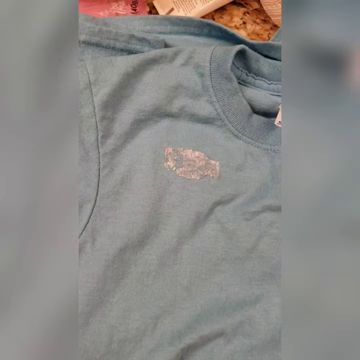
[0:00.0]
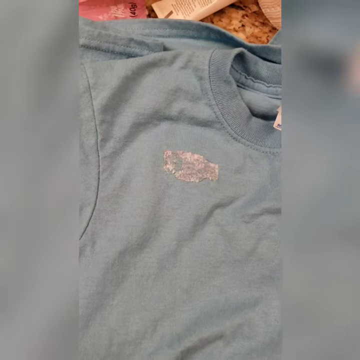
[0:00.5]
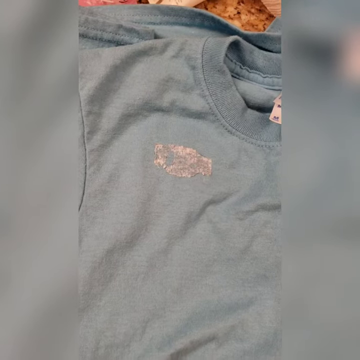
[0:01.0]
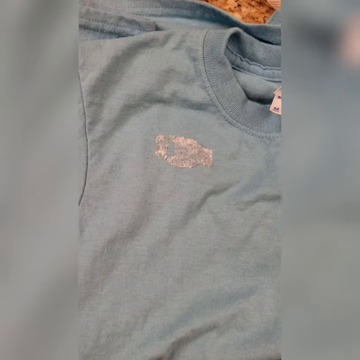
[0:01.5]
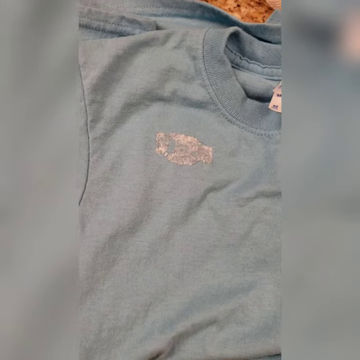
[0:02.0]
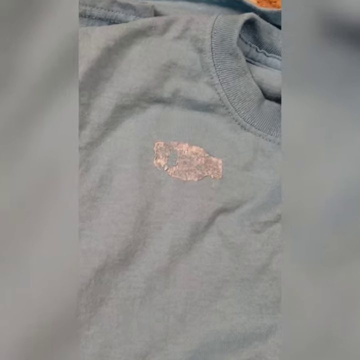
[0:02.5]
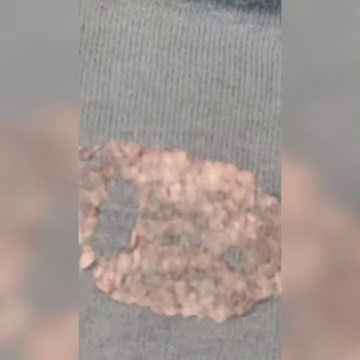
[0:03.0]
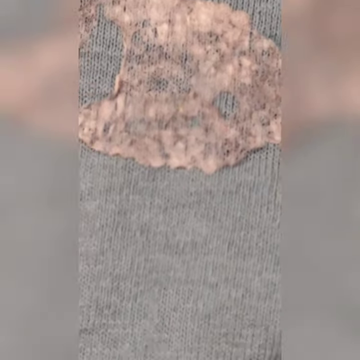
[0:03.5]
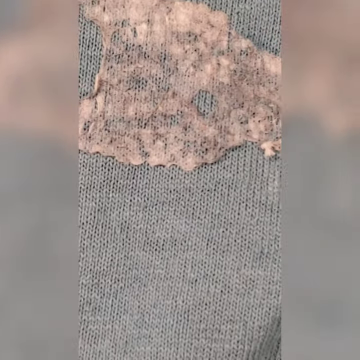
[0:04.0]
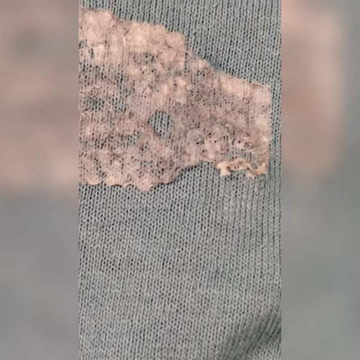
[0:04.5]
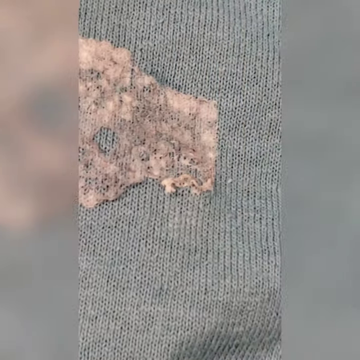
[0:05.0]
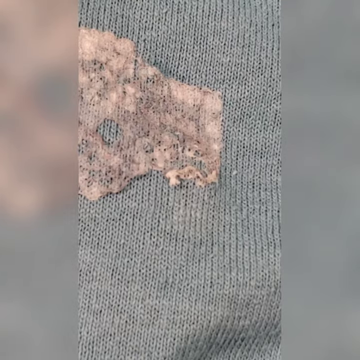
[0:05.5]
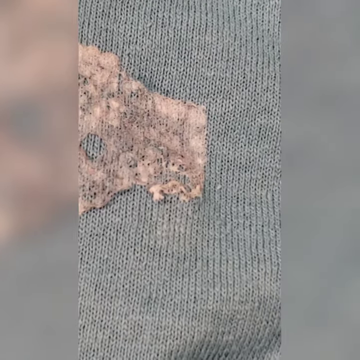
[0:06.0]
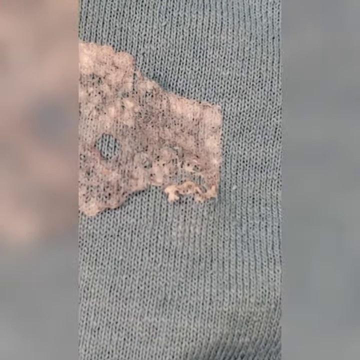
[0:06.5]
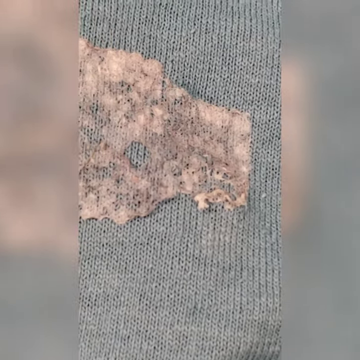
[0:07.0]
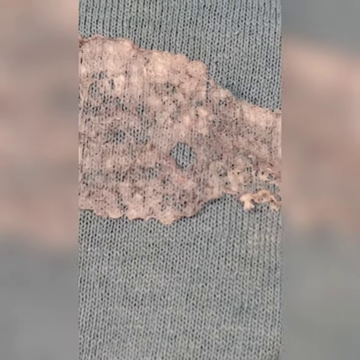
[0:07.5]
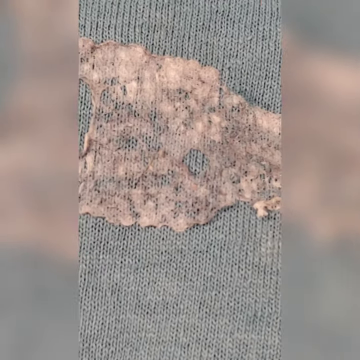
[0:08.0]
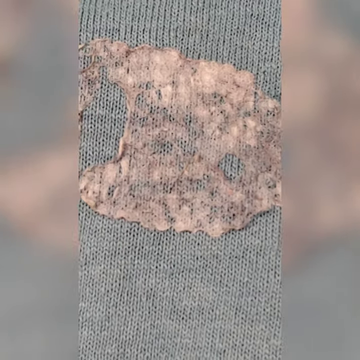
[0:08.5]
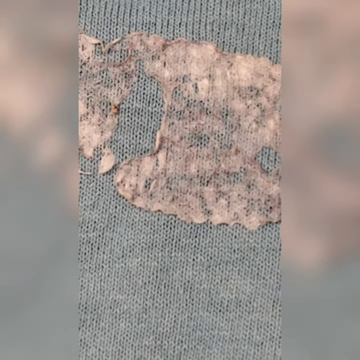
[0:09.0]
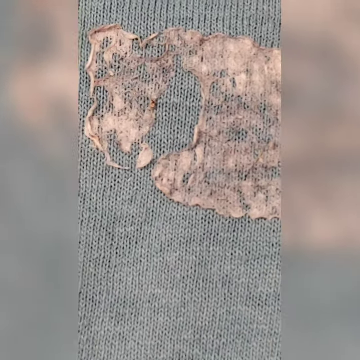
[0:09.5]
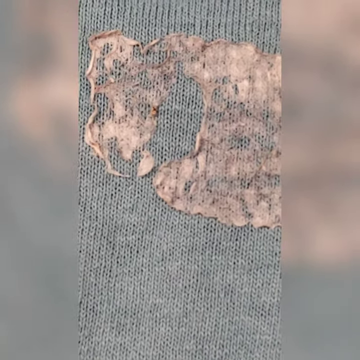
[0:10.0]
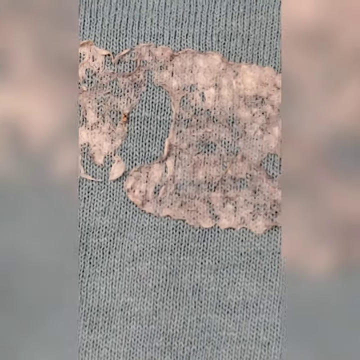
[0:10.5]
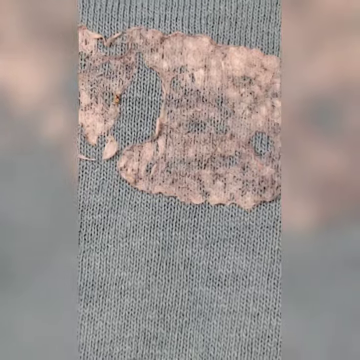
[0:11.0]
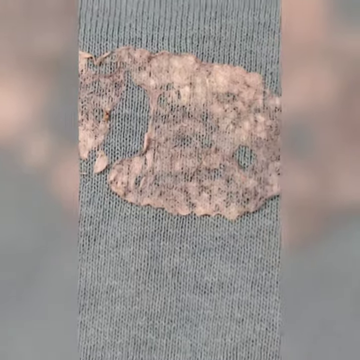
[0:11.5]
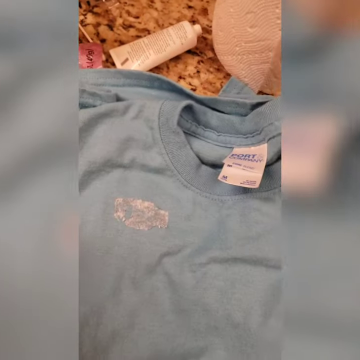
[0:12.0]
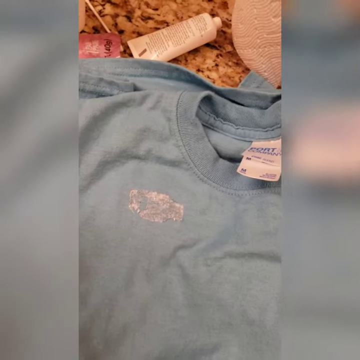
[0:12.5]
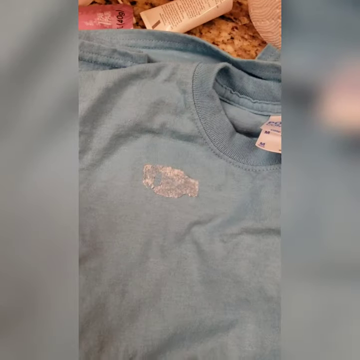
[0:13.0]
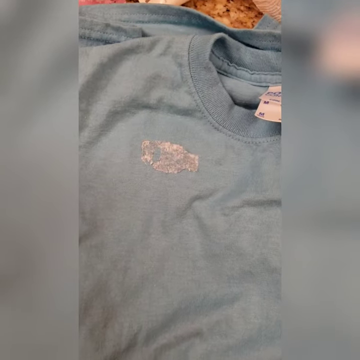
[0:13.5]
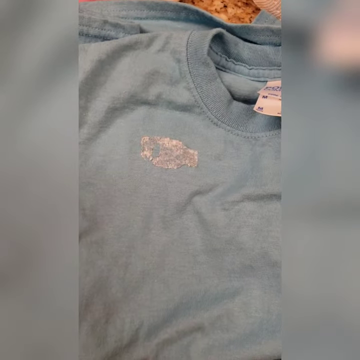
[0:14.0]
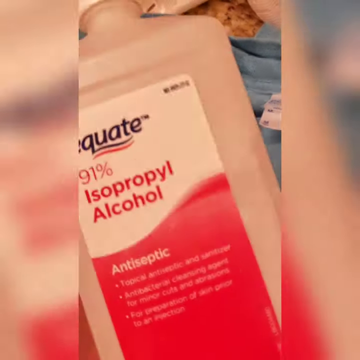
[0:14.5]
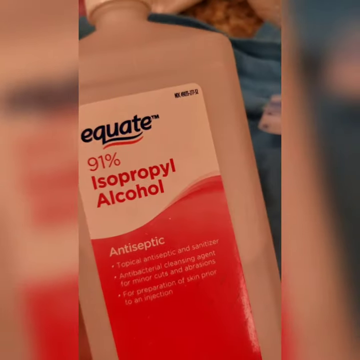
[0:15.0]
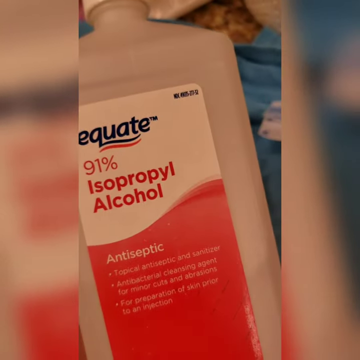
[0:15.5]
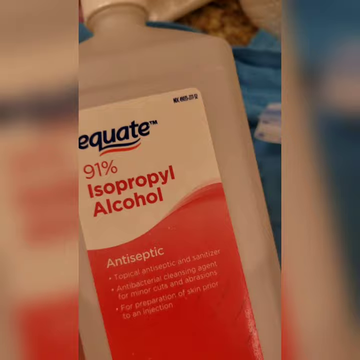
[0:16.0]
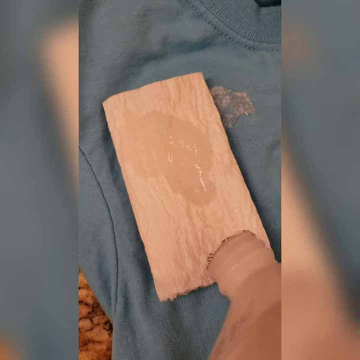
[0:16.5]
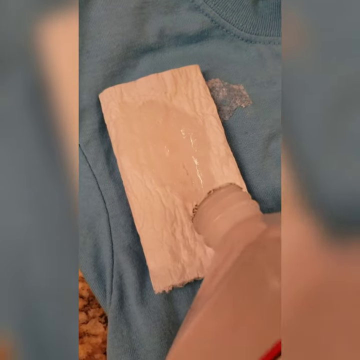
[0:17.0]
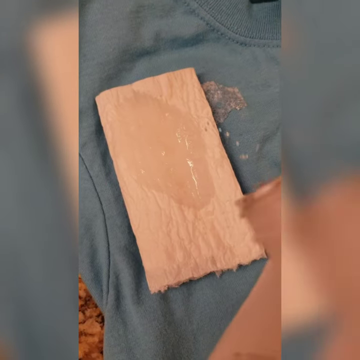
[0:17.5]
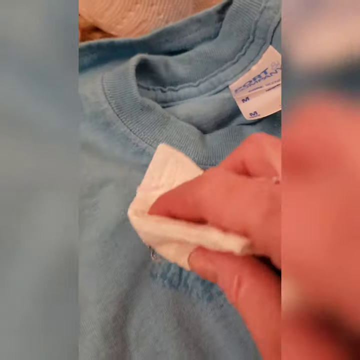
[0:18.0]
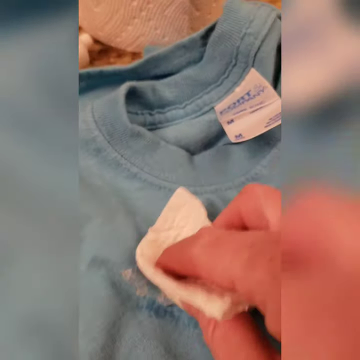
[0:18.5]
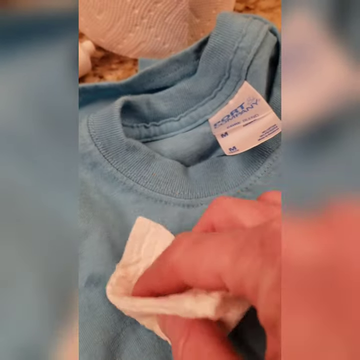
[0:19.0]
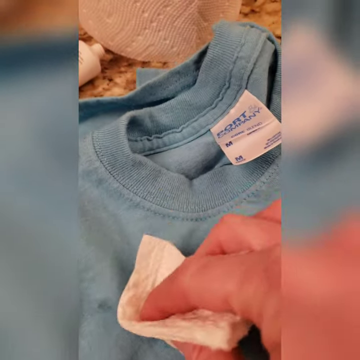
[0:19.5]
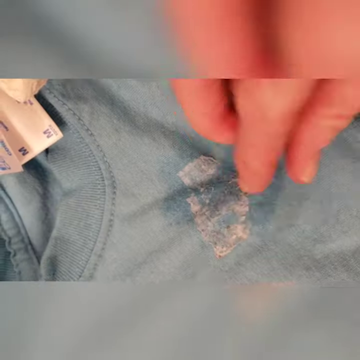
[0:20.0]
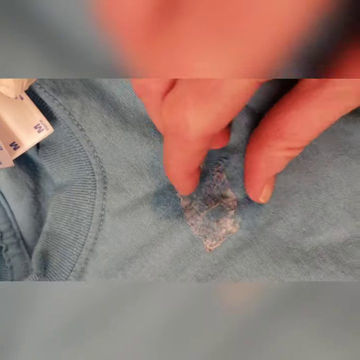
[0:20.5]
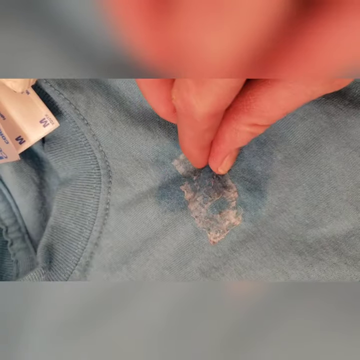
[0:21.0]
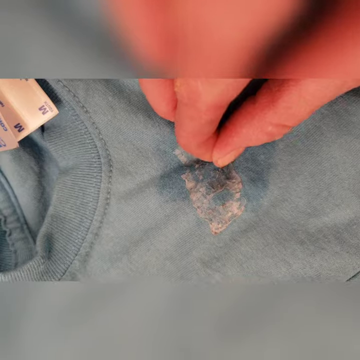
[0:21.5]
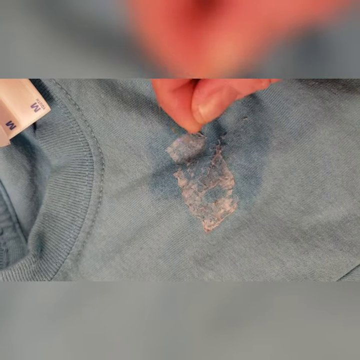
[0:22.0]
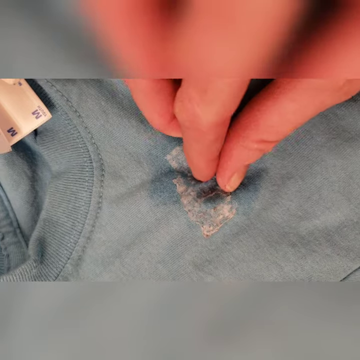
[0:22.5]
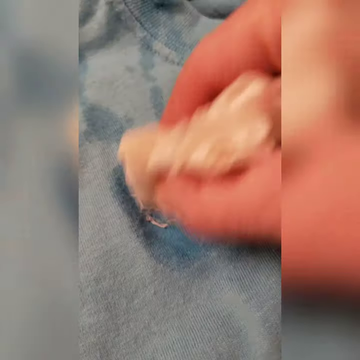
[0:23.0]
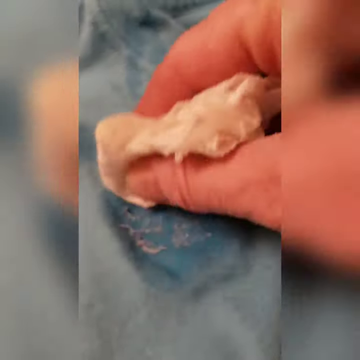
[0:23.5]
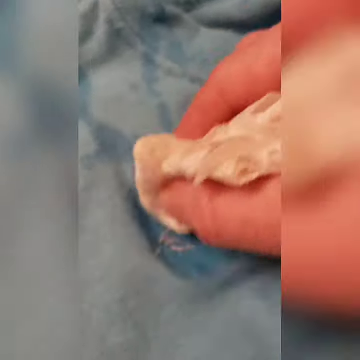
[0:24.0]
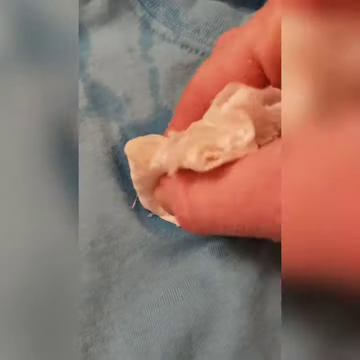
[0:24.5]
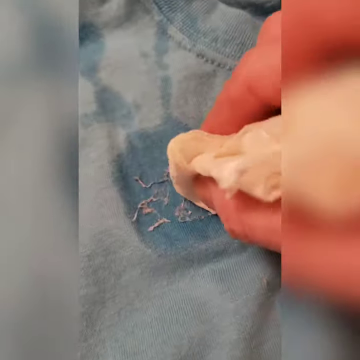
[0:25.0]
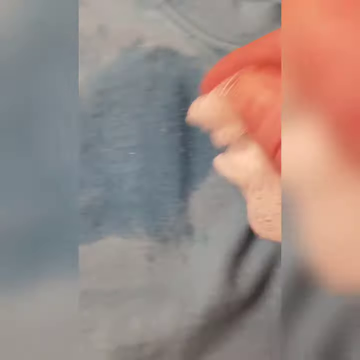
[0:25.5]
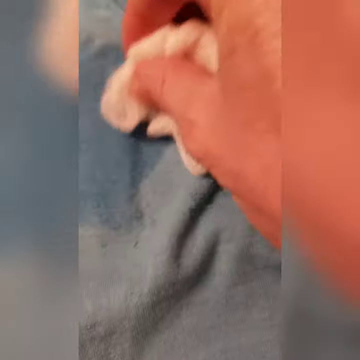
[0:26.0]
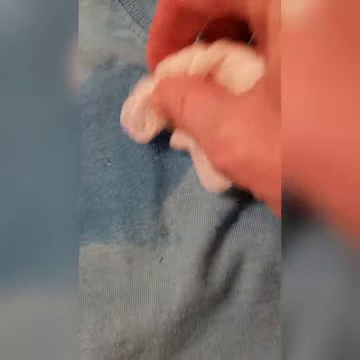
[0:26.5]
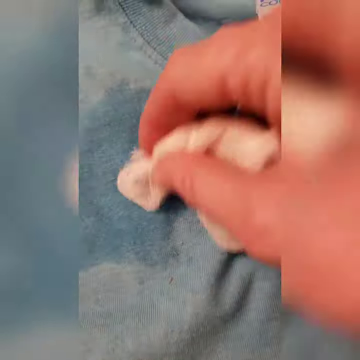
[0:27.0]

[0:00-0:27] The video, titled How to Get Sticky Residue Off Clothing, is shot in portrait mode. It opens with a close-up of a gray t-shirt, somewhat zoomed in around the upper right area by the collar. White residue from a sticker or something similar covers the upper chest area of the shirt. The camera then zooms in very close, showing the white gummy residue on the fabric. Next, a semi-transparent white plastic bottle of Equate 91% isopropyl alcohol with an orange and white label appears. What looks like a small piece of white cloth, napkin or toilet paper is folded and laid on top of the shirt as he pours some of the isopropyl alcohol onto the piece of paper. He dabs the alcohol onto the adhesive on the shirt, picks at the residue a little, and then uses the alcohol-soaked paper to dab at the residue until it is completely removed.